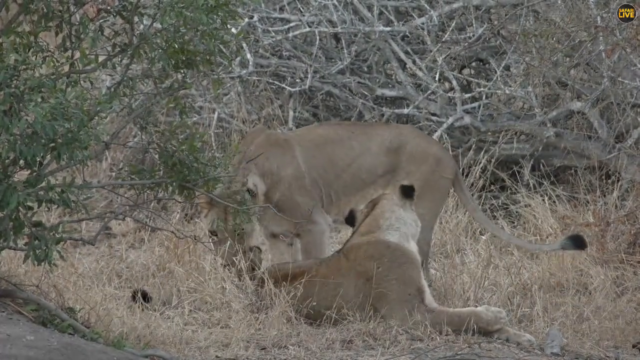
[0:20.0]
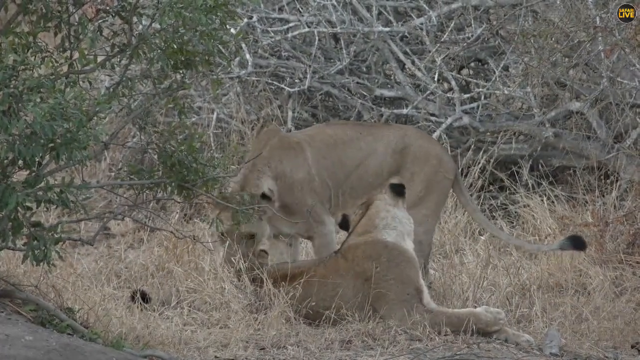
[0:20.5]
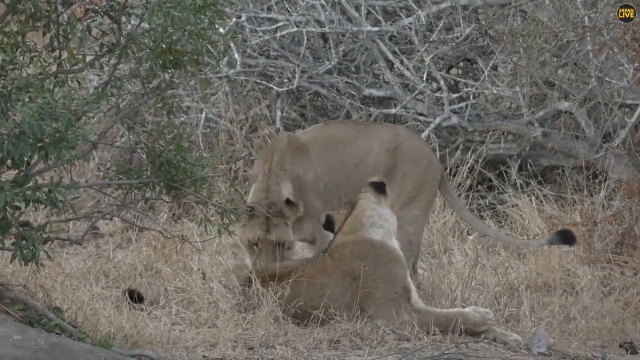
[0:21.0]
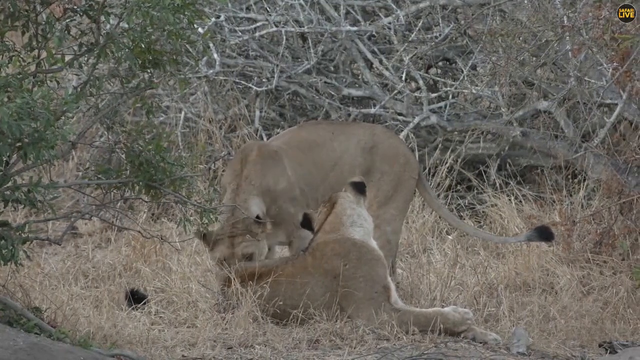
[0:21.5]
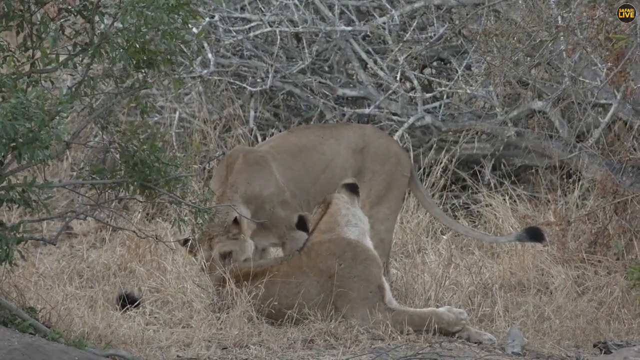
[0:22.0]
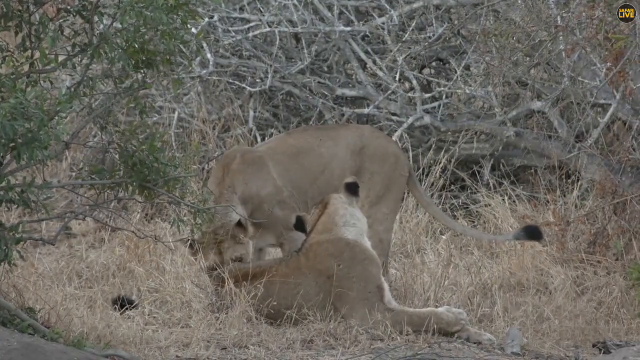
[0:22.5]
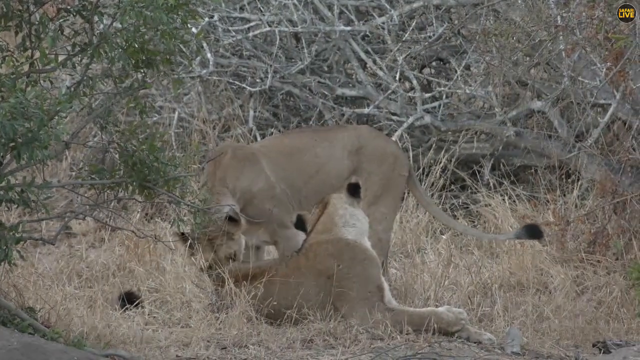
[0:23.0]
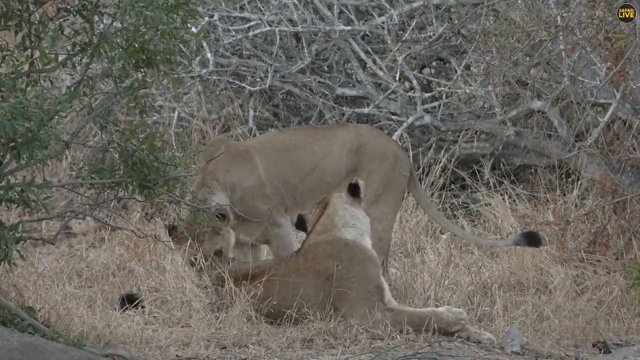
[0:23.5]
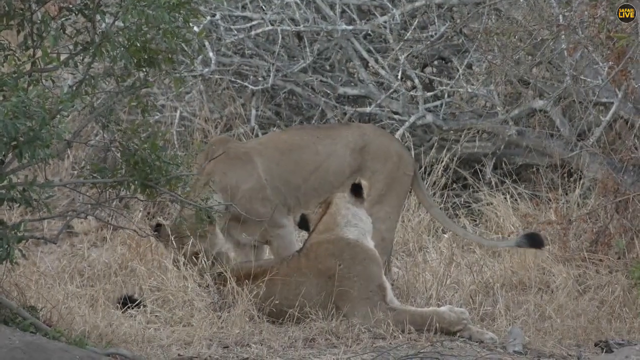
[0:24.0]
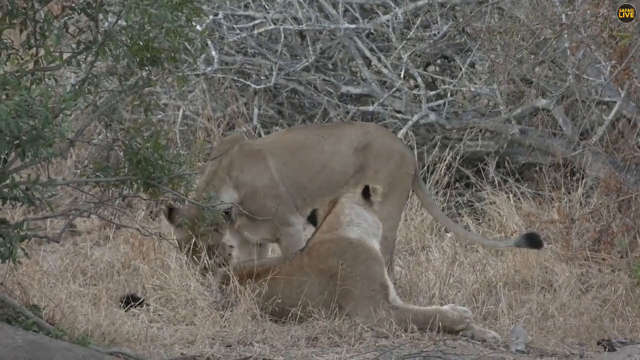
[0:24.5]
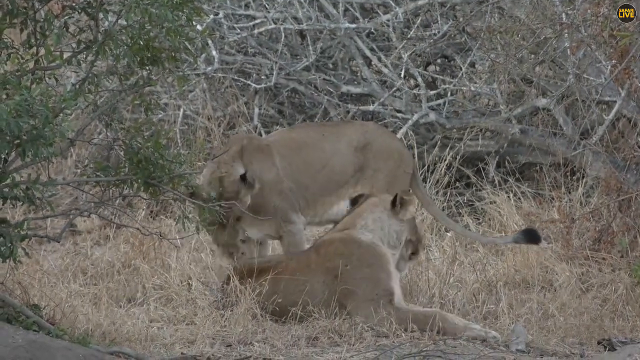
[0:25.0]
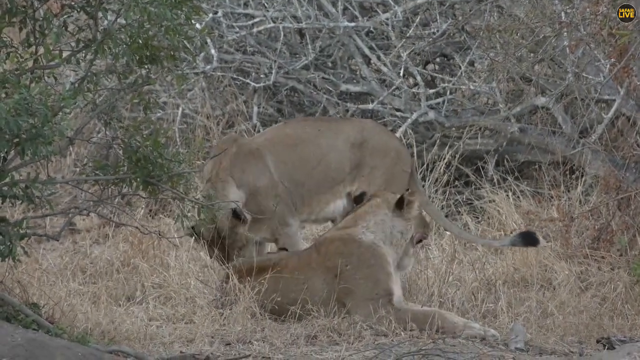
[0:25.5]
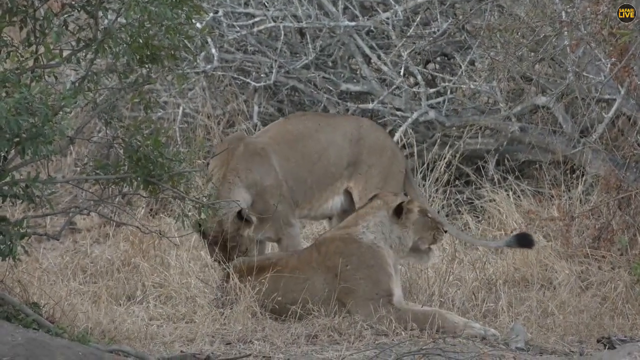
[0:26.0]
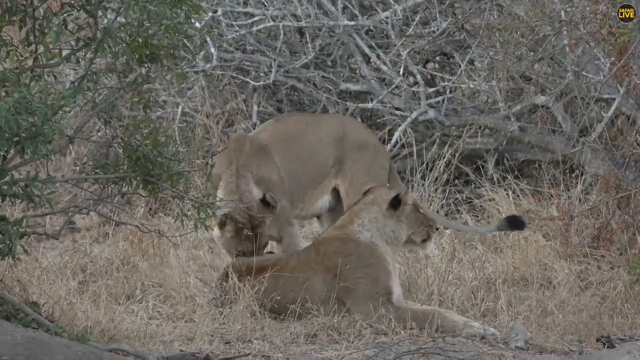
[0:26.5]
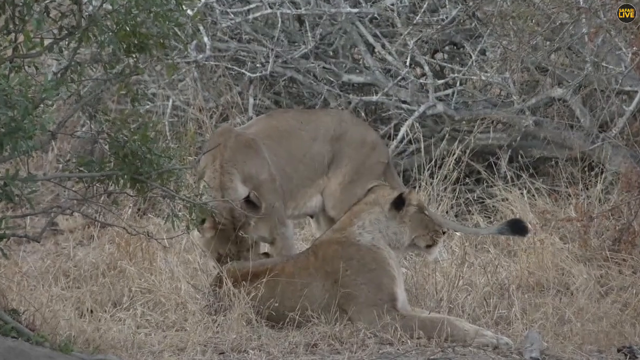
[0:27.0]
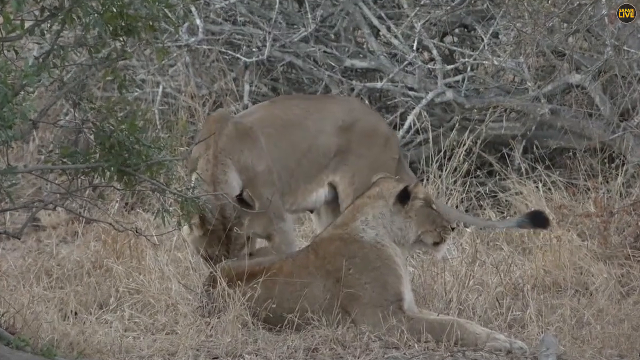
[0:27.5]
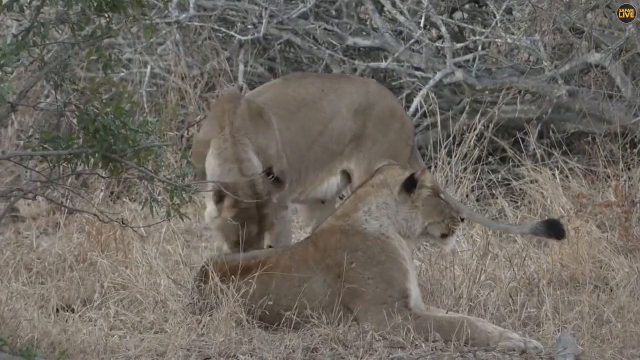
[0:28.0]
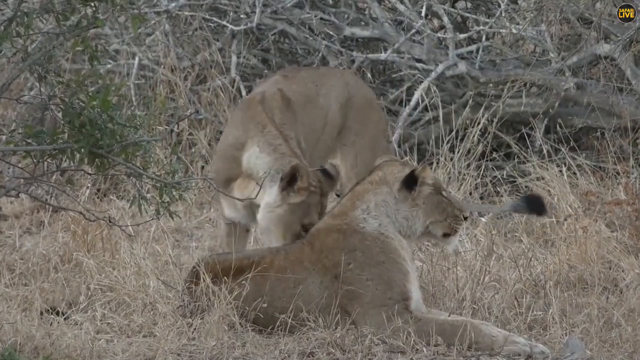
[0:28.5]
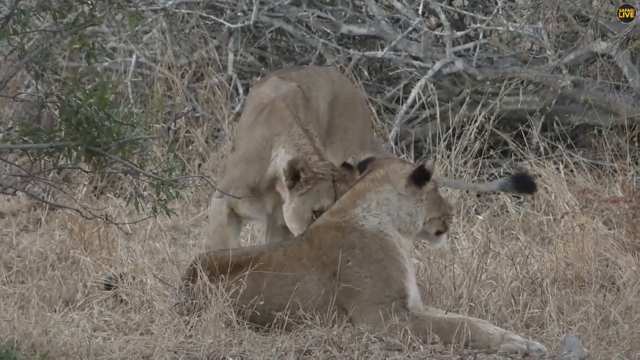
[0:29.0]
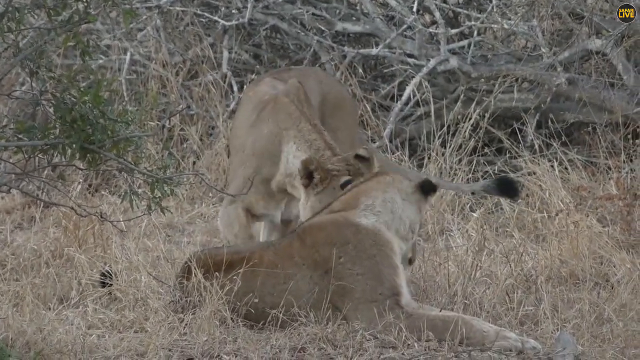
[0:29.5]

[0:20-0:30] Out in some type of savanna environment, everything is very brown, with tree scrubs and savanna grass. There are two female lions and a baby lion. One female lies on the grass with her back to the camera. The other lion is standing and picks up the baby lion in her mouth, kind of nibbling on it. The camera starts to zoom in. It is hard to see exactly what she is doing because the baby lion is on the other side of the lying lion, which blocks some of the detail, but the standing lion can clearly be seen trying to chew at the baby.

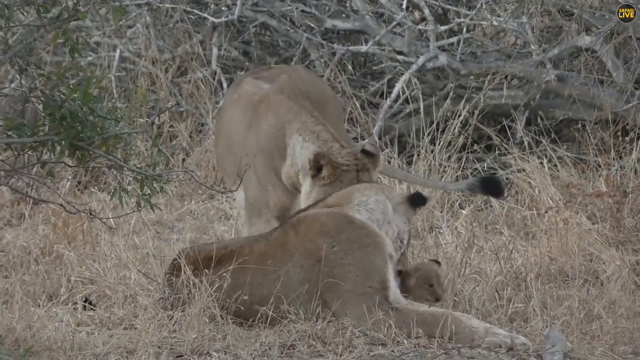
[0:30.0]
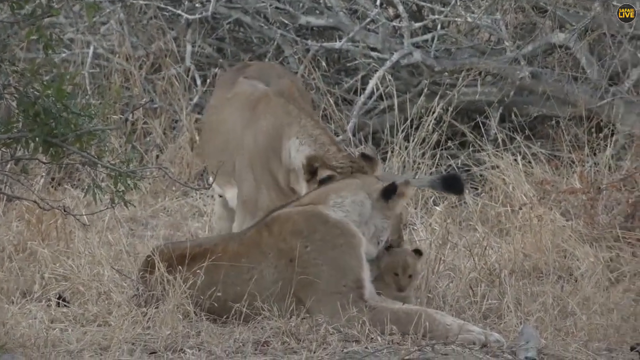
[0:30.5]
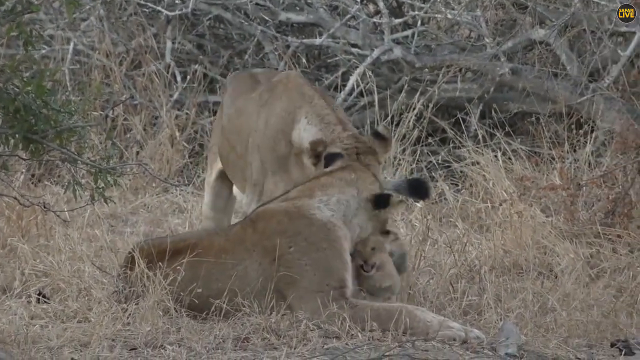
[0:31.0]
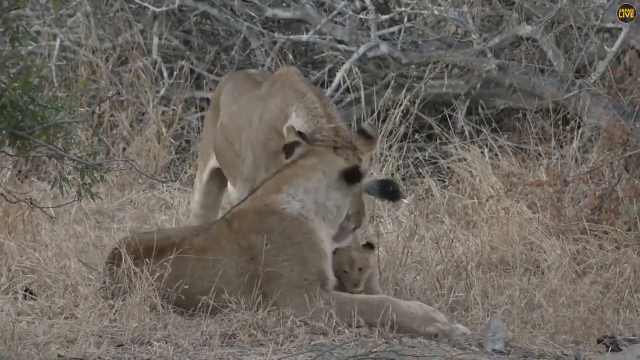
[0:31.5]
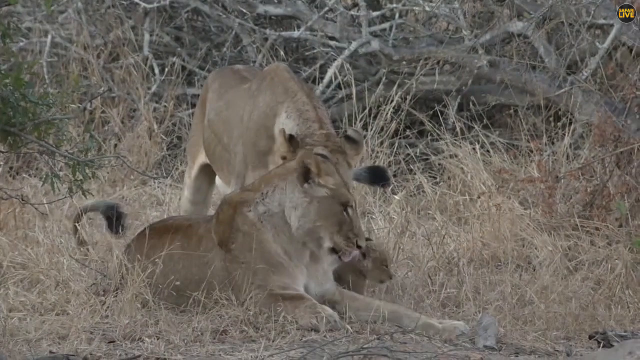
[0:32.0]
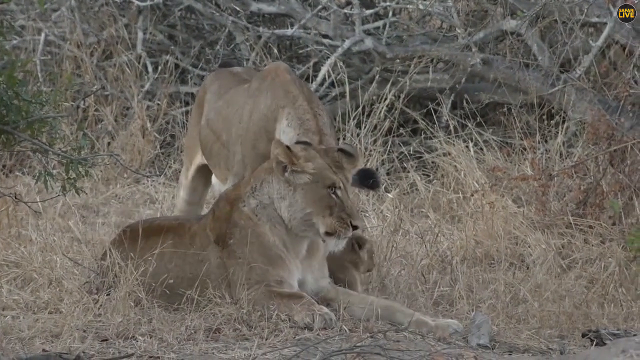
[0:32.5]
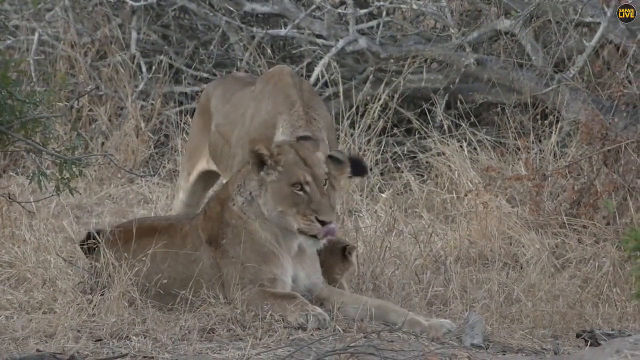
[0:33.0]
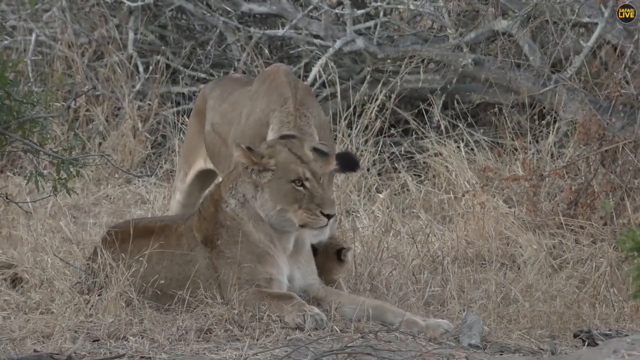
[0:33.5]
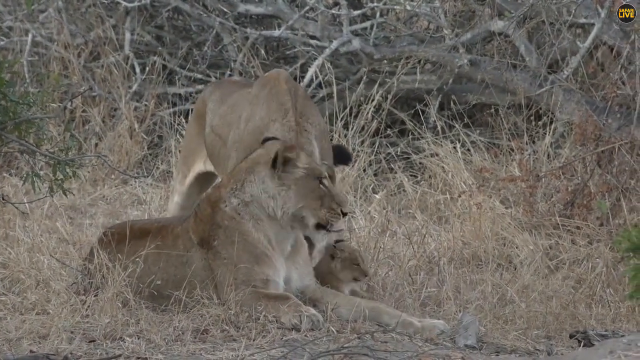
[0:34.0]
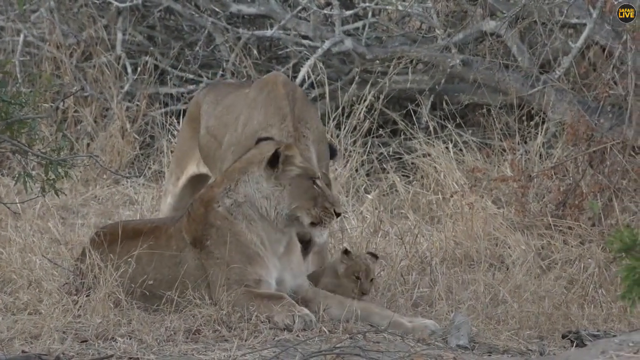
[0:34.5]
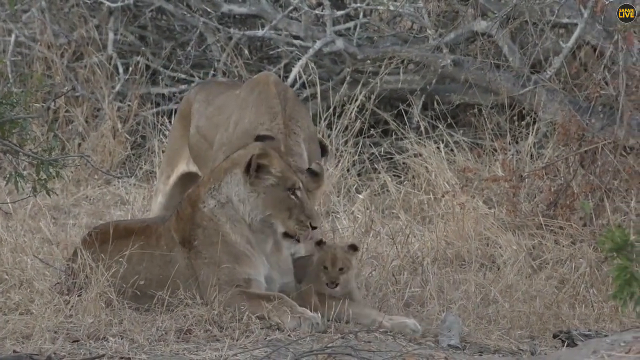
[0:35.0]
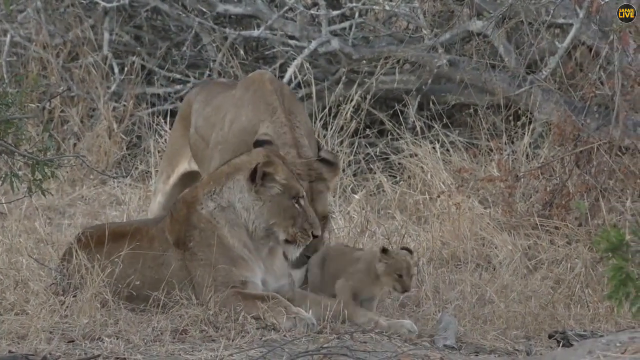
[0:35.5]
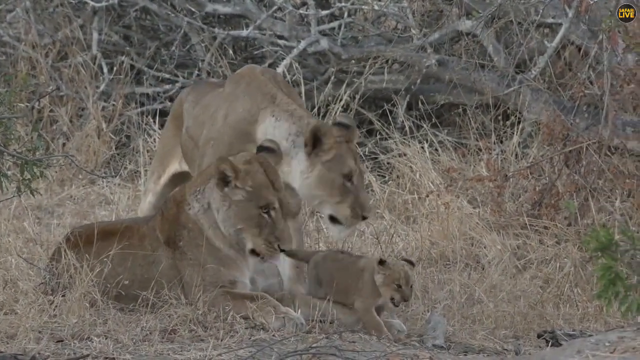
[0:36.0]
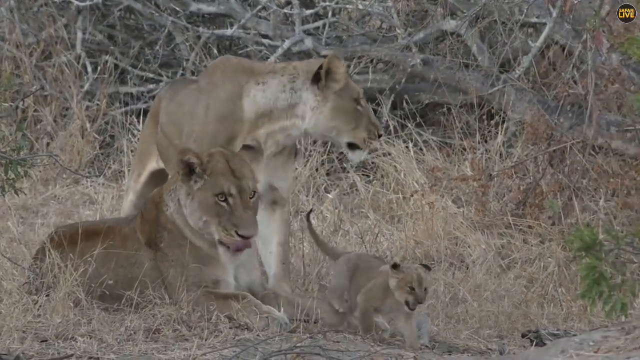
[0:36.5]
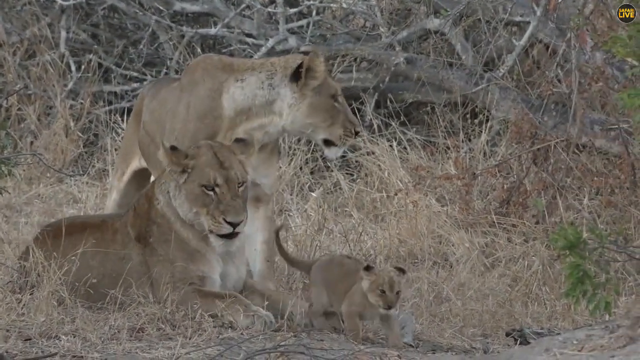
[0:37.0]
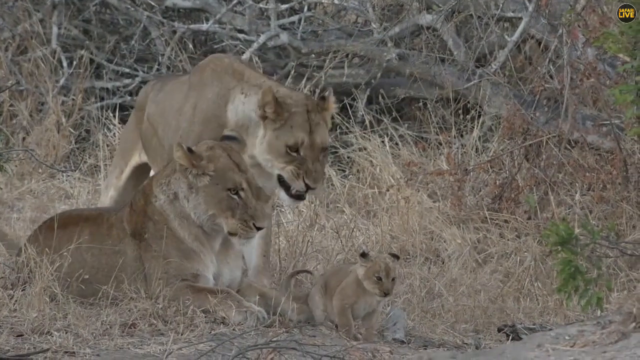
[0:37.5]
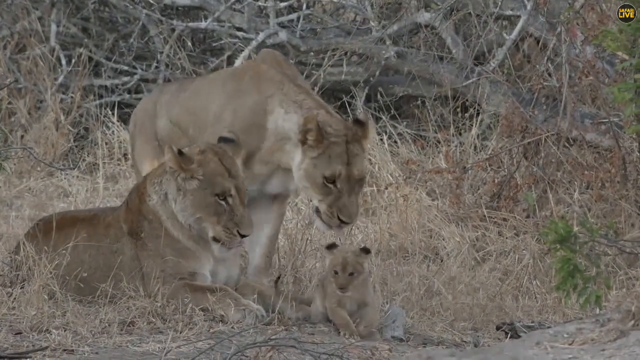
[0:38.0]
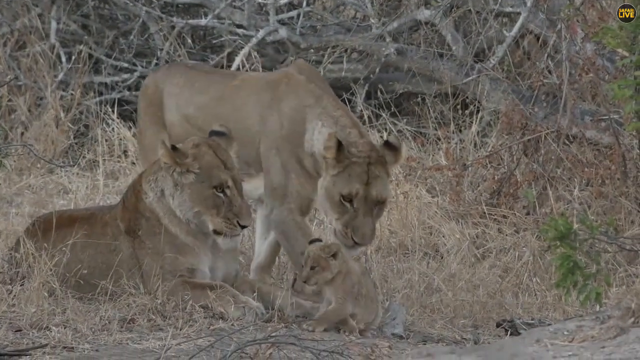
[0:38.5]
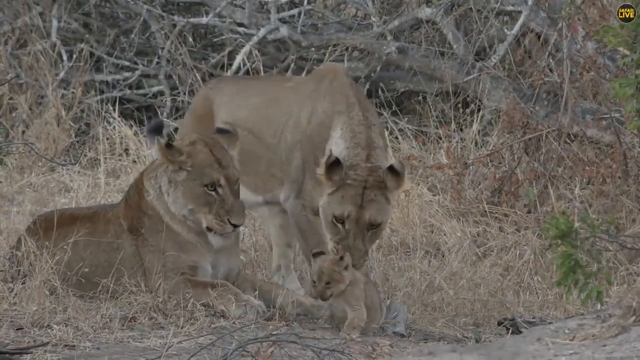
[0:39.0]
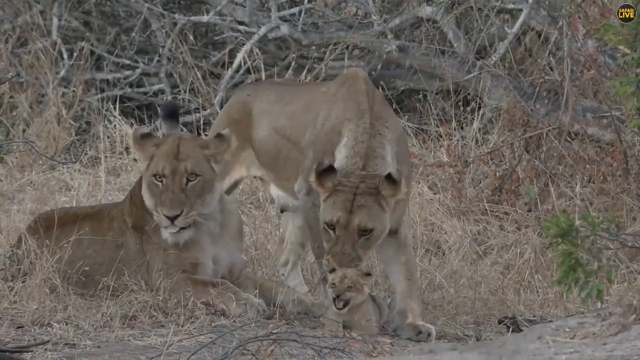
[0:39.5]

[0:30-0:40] Outdoors, in what looks like some kind of savannah environment, everything is very brown, with dead trees everywhere and very brown, dead-looking grass. Two female lions are present; one is lying down and one is standing. A baby lion cub is in between them, and the standing lion is trying to do something with it, kind of nudging at it with her mouth. The cub tries to move closer to the lying lion, seemingly to get away from the lion that keeps putting its mouth on it. The cub has its mouth open, maybe growling, and then the older lion that is nudging at it kind of opens her mouth as if growling. She continues to try to lick and kind of bite at the cub.